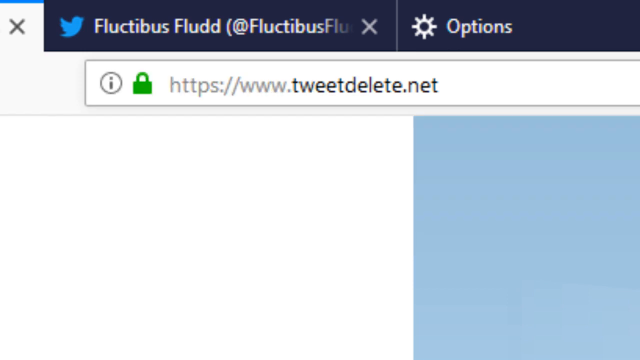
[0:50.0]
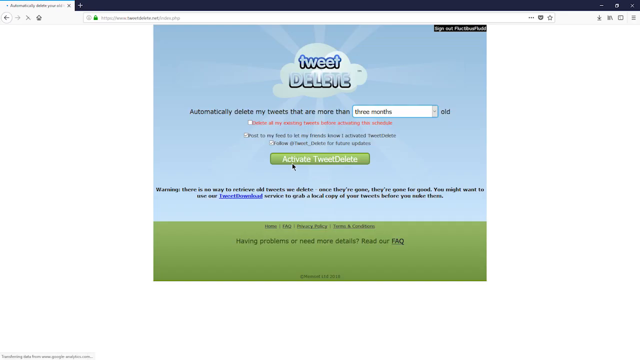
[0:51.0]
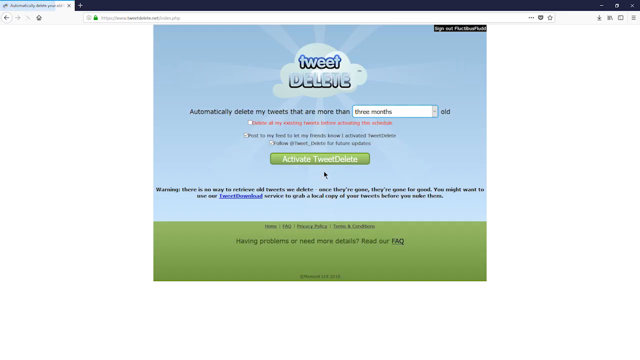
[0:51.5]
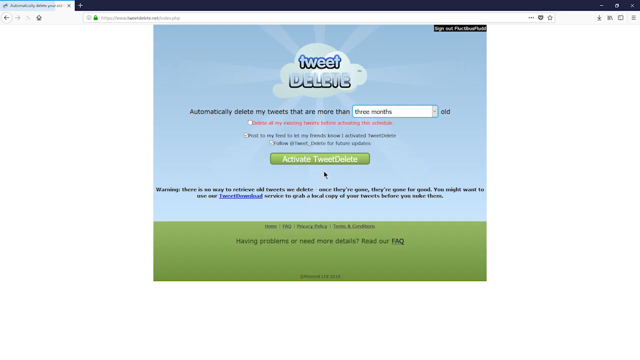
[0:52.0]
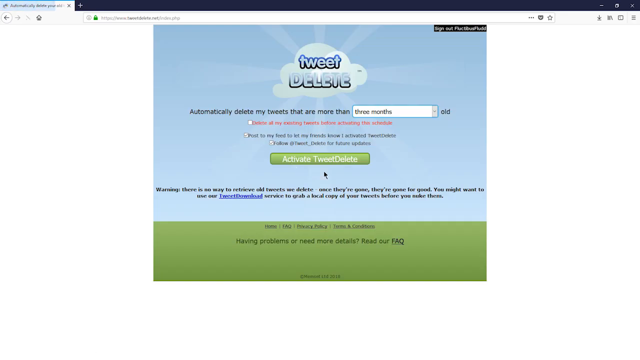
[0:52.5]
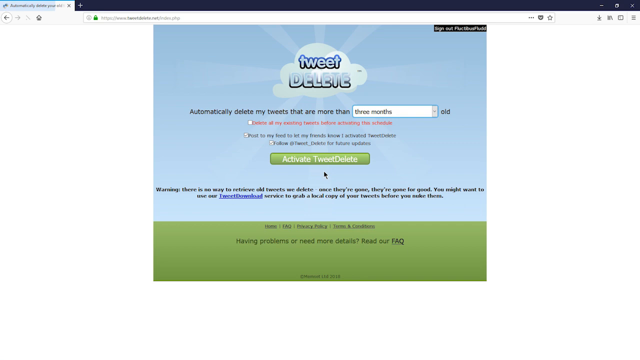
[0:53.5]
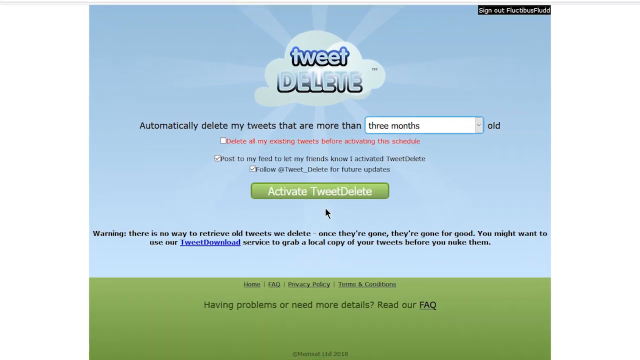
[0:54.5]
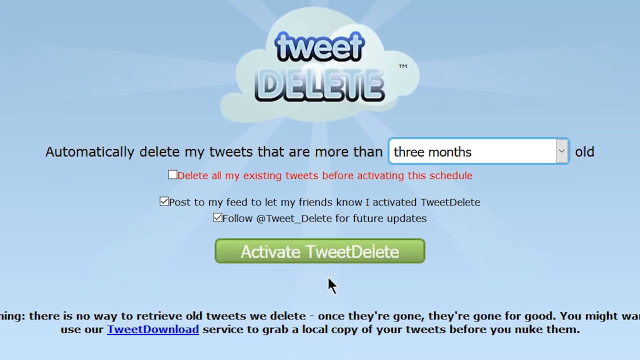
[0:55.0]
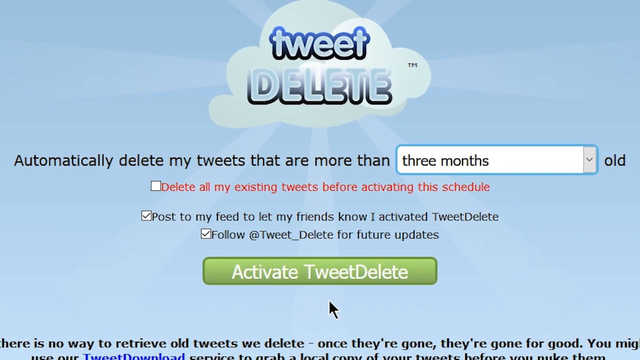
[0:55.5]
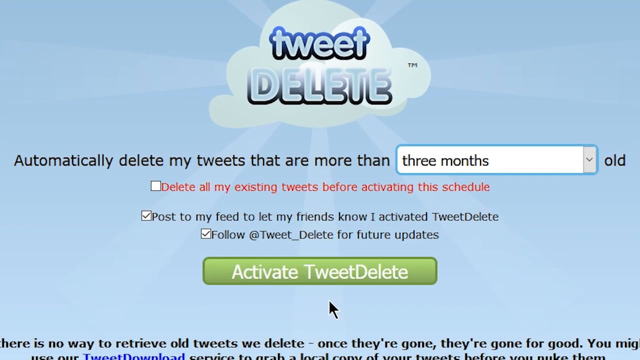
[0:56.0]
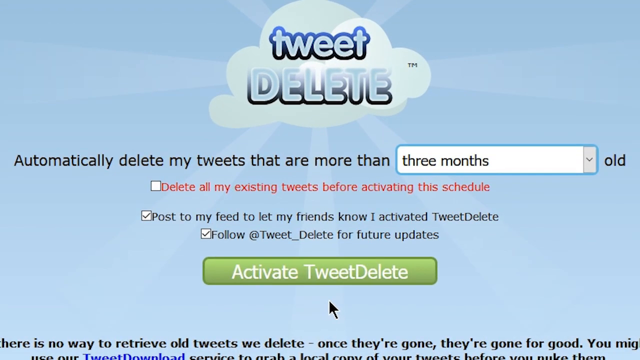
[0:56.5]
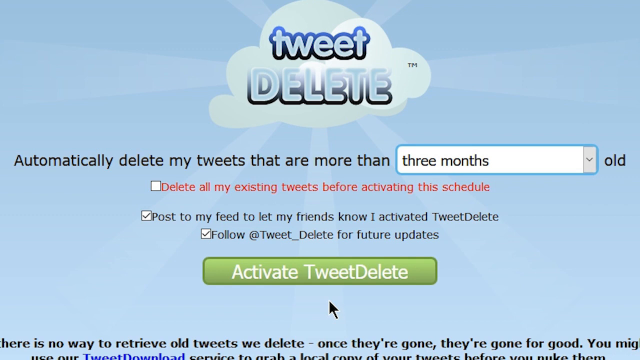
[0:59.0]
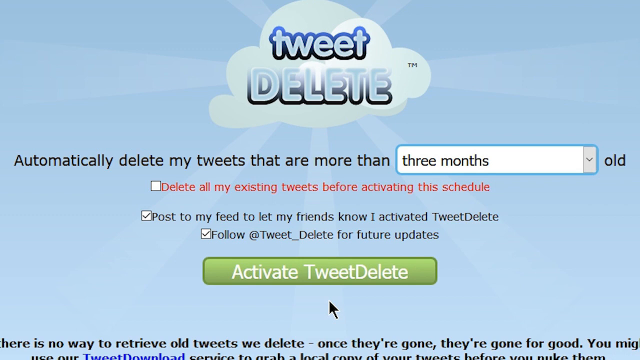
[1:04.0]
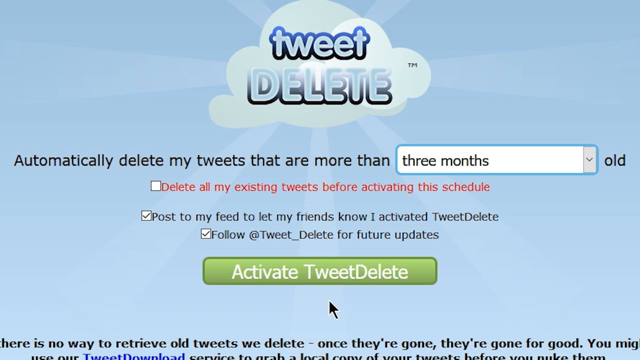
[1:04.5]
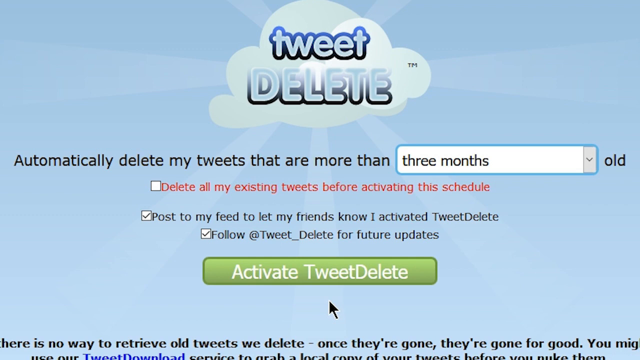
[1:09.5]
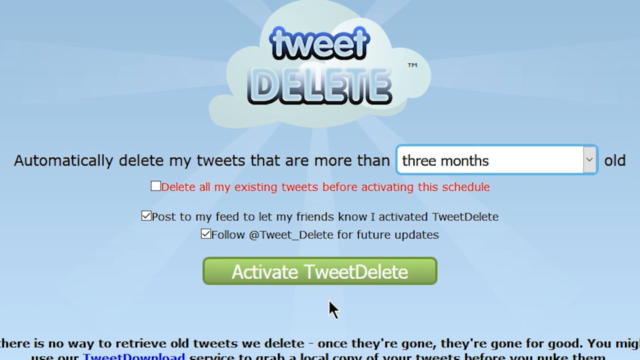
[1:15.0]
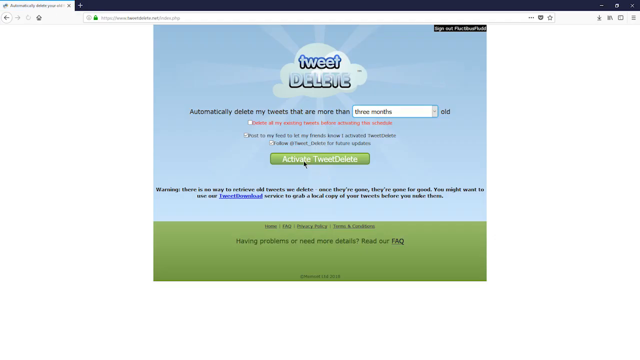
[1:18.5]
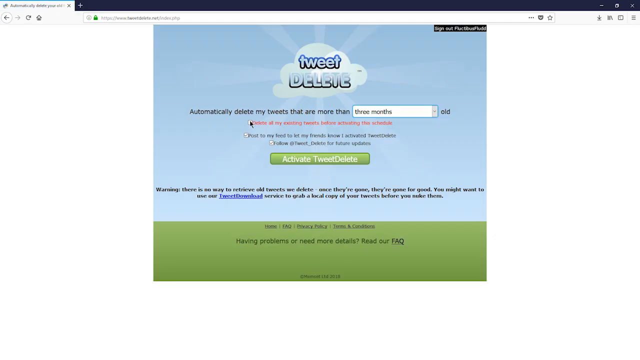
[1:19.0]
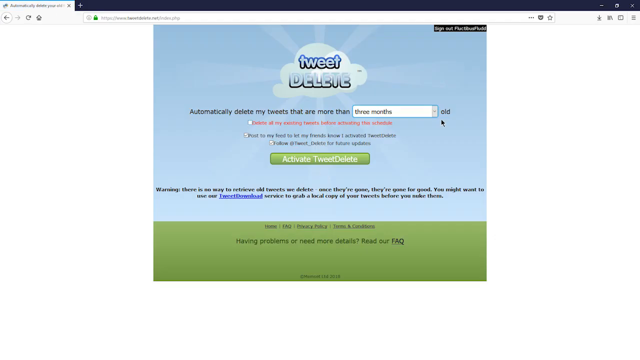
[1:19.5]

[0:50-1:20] A close-up of the browser shows the URL bar reading "https://www.tweetdelete.net". At the top, another tab on the right has the Twitter bird icon and the Twitter username "FluctibusFludd", and to the right of that another tab shows a Settings icon and "Options". A zoomed-out view then shows the whole website loaded in the browser. It has a white background and a large image in the middle of a blue sky, green grass and one white cloud, with "tweet delete" inside the cloud and kind of transparent white rays coming out of it like a sun. Text underneath reads "automatically delete any tweets that are more than", followed by a drop-down menu showing "three months" and then "old". Below that is an unchecked checkbox with red text next to it: "delete all my existing tweets before activating this schedule". Under it, a checked checkbox reads "post to my feed to let my friends know I activated tweet delete", and under that another checked checkbox reads "follow @tweet delete for future updates". Beneath these is a long light green button with white letters reading "activate tweetdelete", and under it a small warning message in black font.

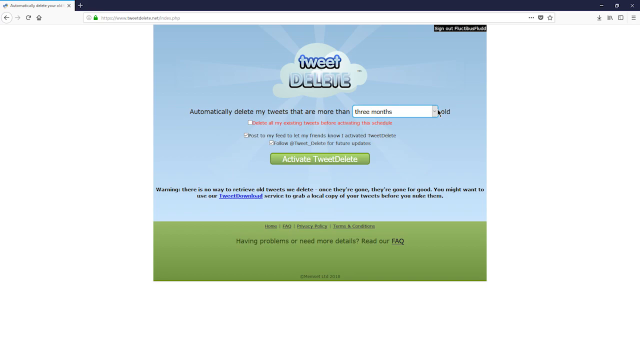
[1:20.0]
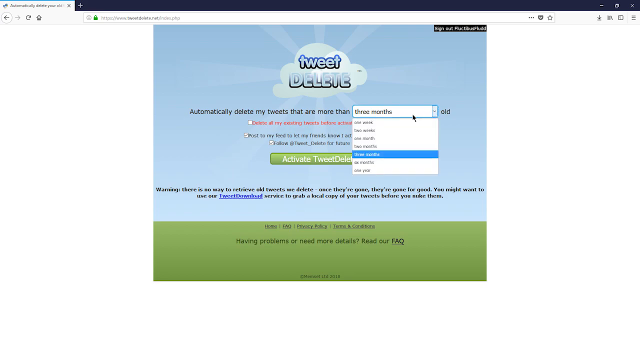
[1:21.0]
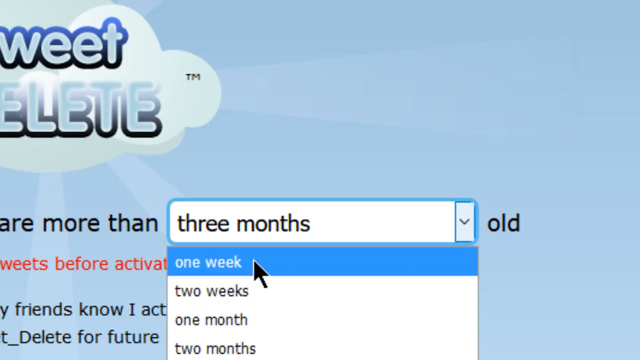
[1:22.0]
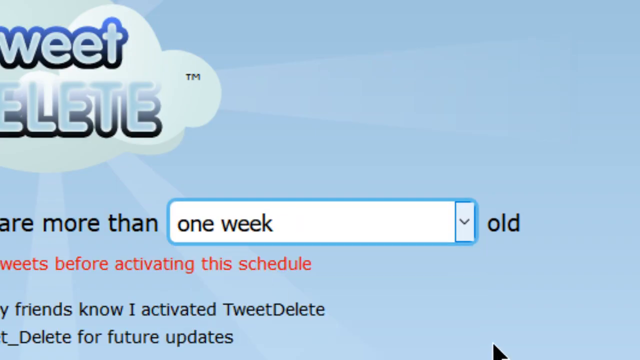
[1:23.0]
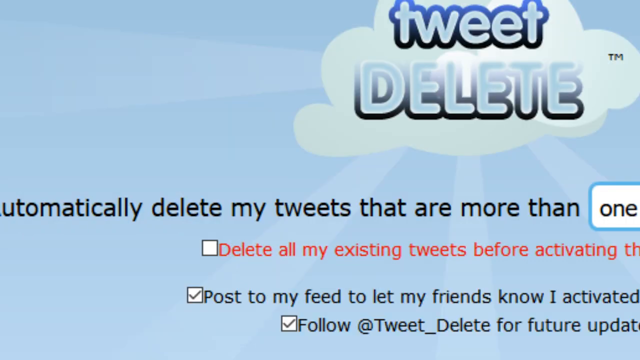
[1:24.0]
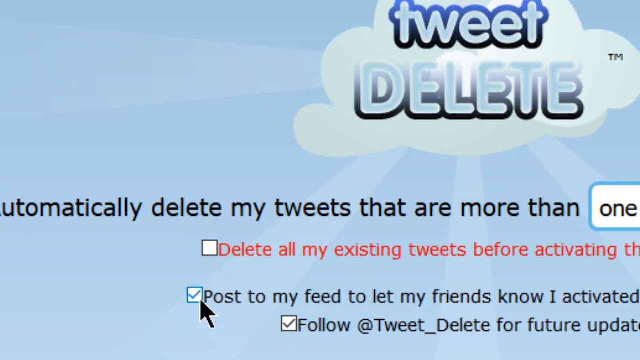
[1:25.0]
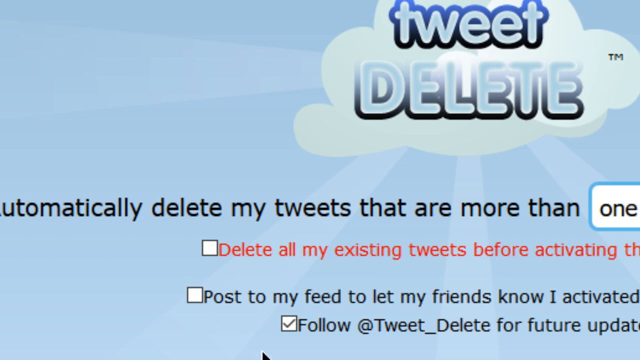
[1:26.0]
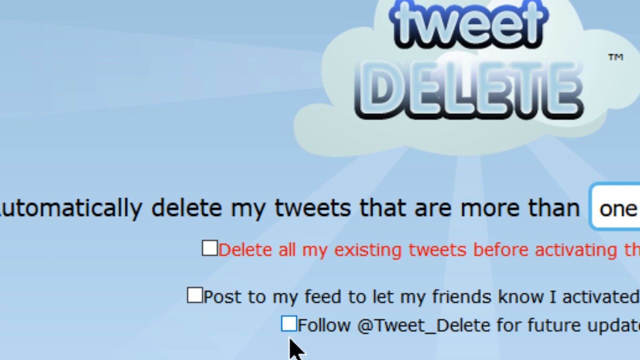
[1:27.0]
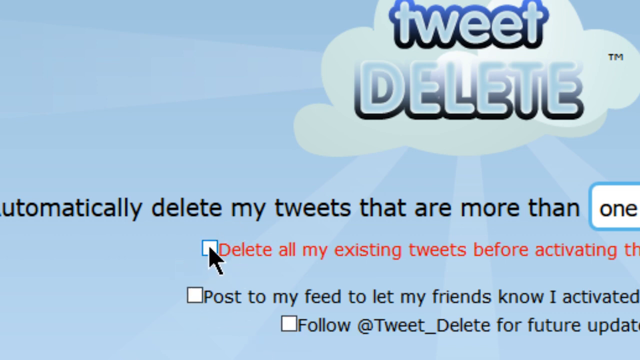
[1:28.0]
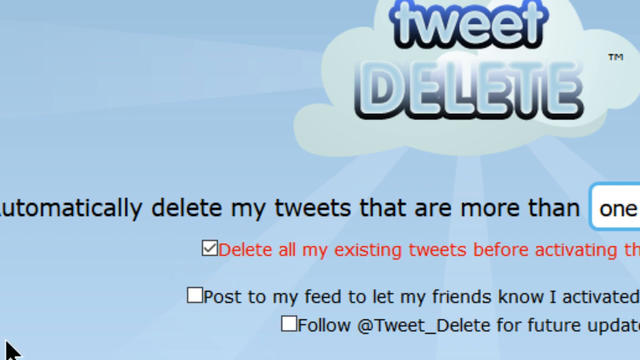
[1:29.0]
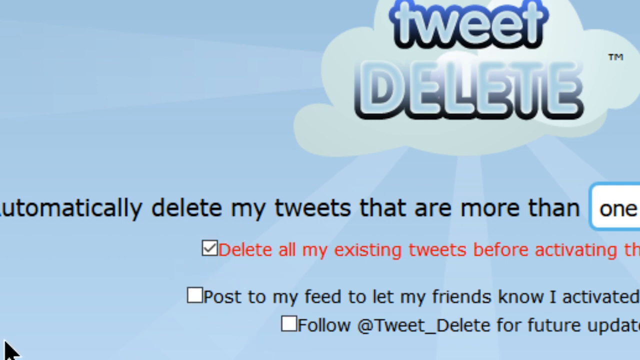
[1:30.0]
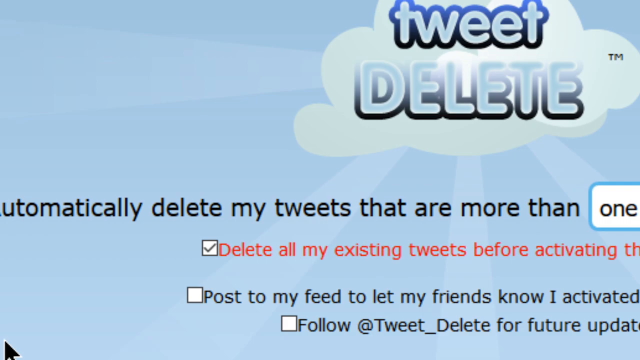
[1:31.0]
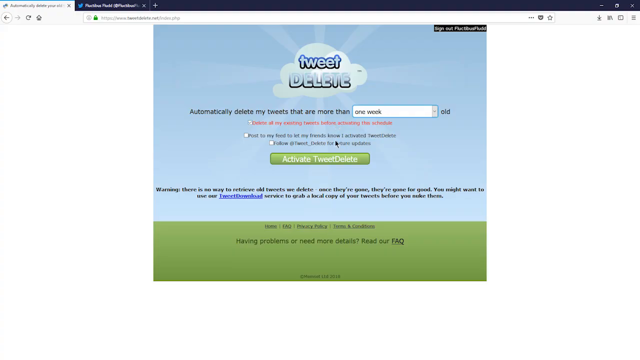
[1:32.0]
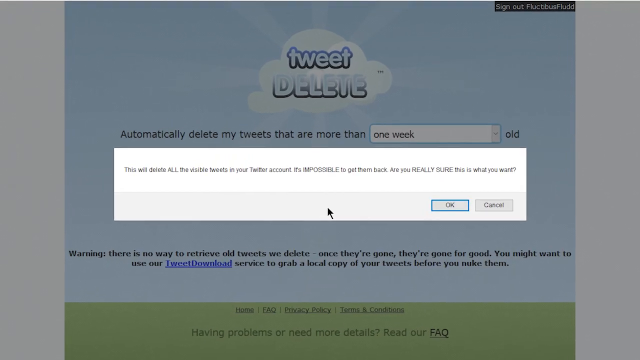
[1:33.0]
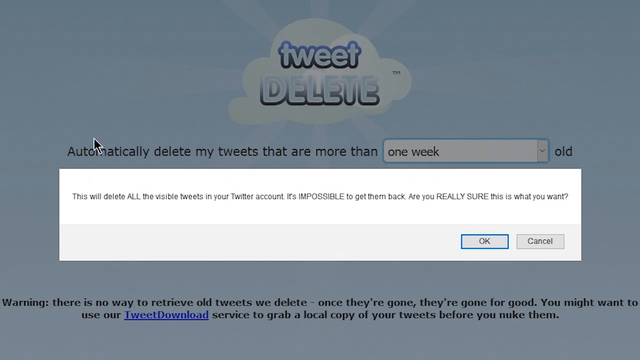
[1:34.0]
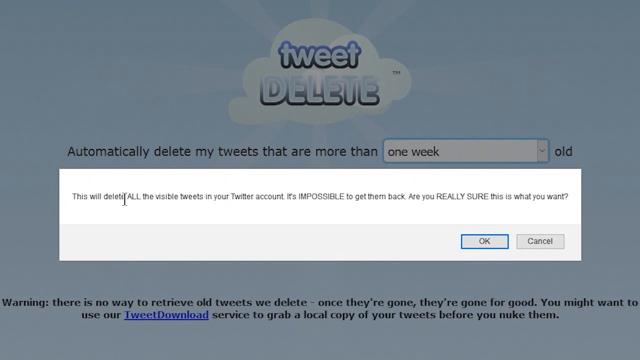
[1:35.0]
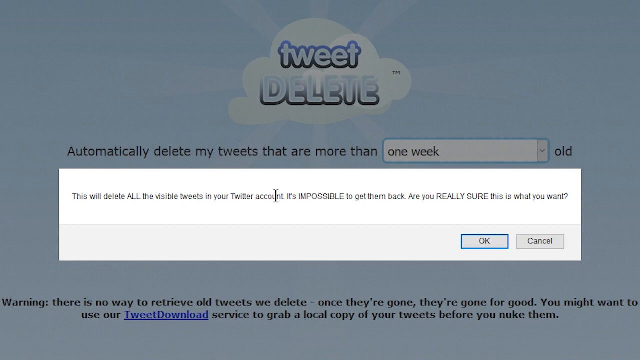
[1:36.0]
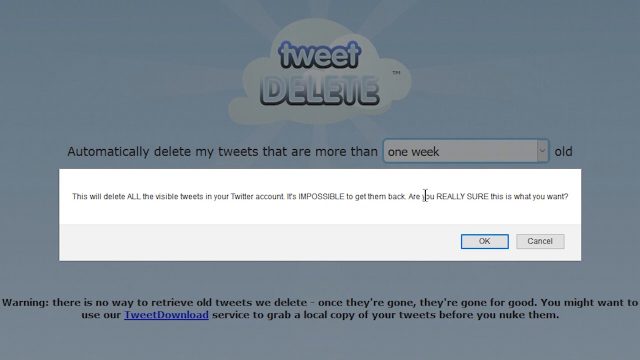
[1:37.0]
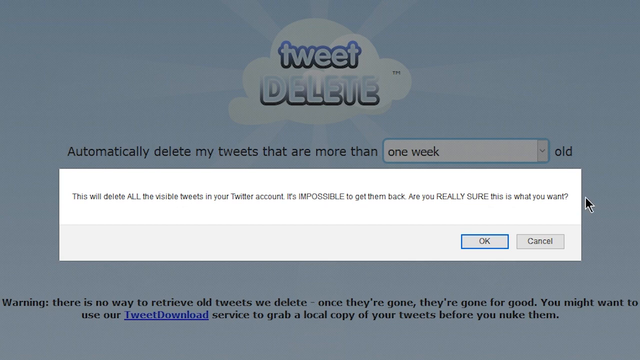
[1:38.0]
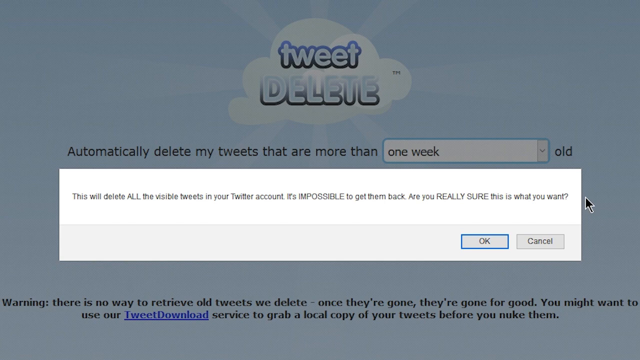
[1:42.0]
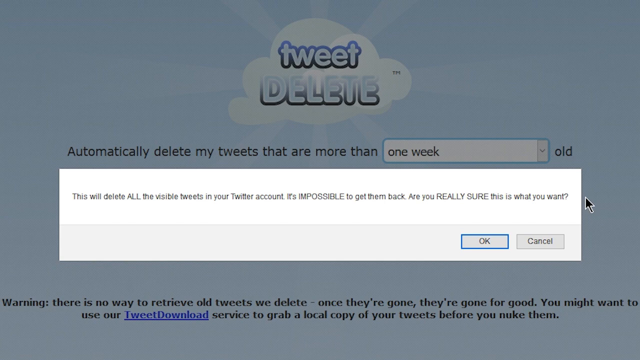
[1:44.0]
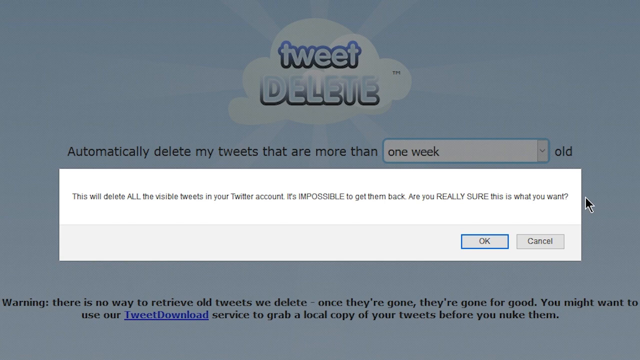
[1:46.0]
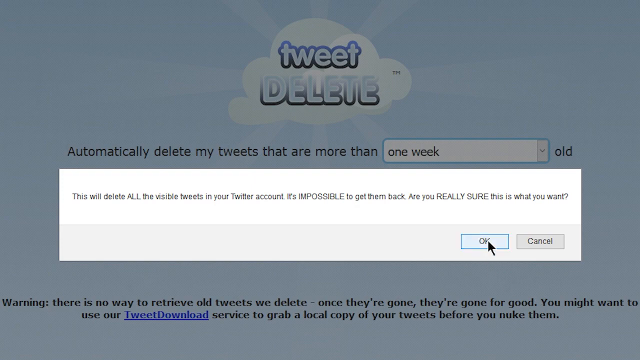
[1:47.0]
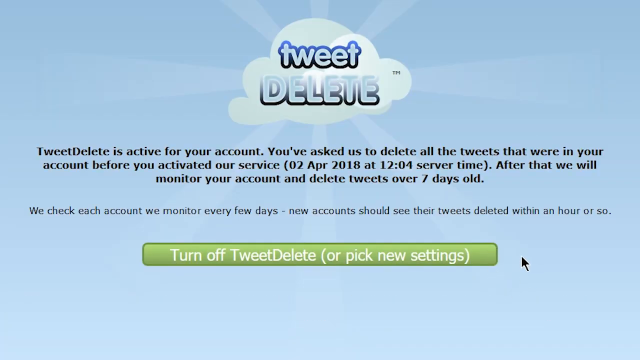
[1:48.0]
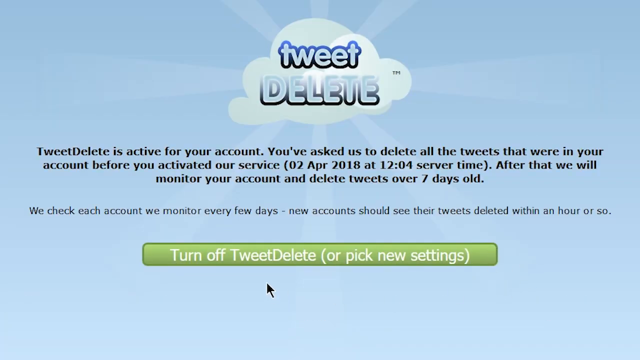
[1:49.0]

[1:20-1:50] The browser is open to the website tweetdelete.net, which has a white background and a large cartoon-looking image in the middle of a blue sky and green grass, with "tweet delete" written inside a cloud on top. Text reads "automatically delete my tweets that are more than", followed by a drop-down menu showing "three months". The cursor clicks the drop-down menu, the view kind of zooms in on it, and the one week option is selected. The view then kind of moves to the left side of the screen, where there are a few checkboxes with the bottom two checked. The cursor unchecks the middle checkbox, then the bottom one, and then checks the top checkbox, which says "delete all my existing tweets before activating the schedule" in red font. The view zooms out to show the whole browser and website, and the user hits the light green "activate tweetdelete" button. The view zooms in on a white pop-up box that says "this will delete all the visible tweets in your Twitter account. It's impossible to get them back. Are you really sure this is what you want?" The cursor kind of hovers over the text, moving left to right, and then clicks the OK button. Back on the website, a message now says "tweetdelete is active for your account", and a green button at the bottom of the page says "turn off tweetdelete (or pick new settings)".